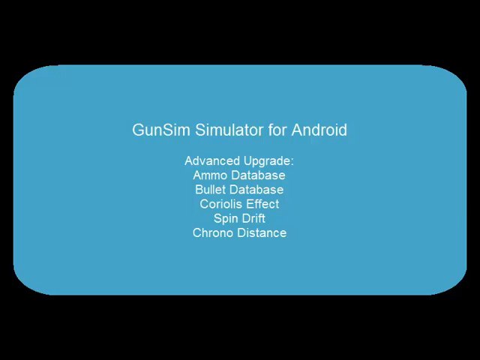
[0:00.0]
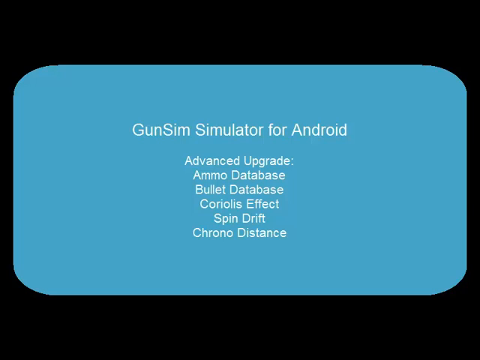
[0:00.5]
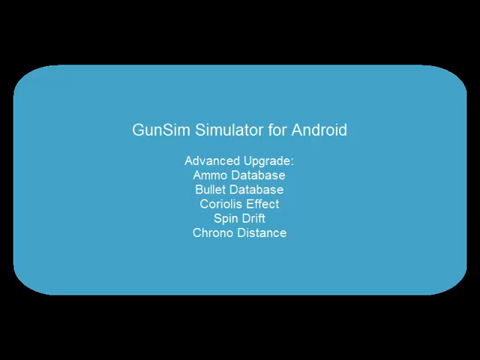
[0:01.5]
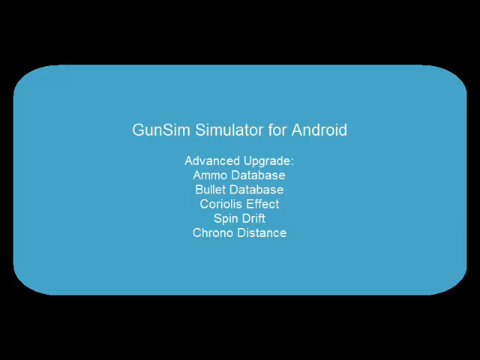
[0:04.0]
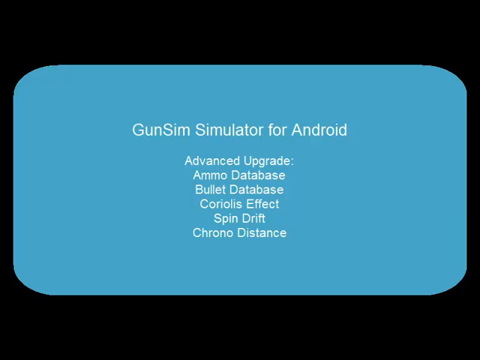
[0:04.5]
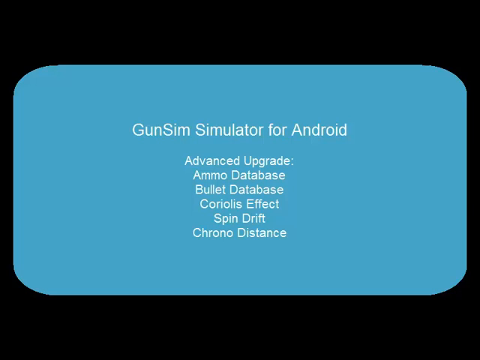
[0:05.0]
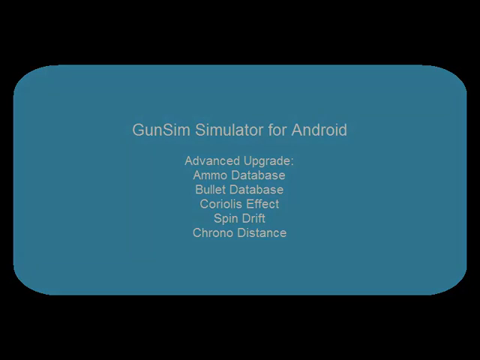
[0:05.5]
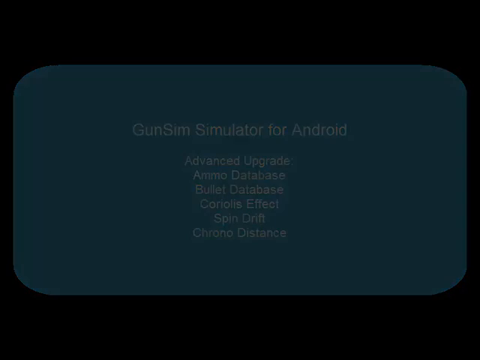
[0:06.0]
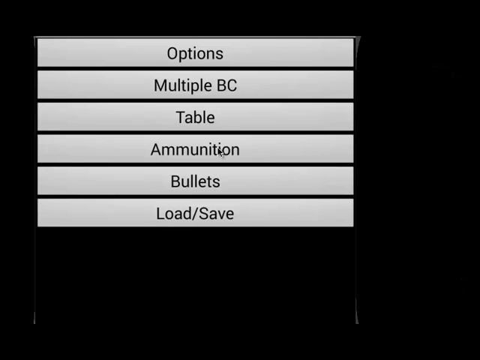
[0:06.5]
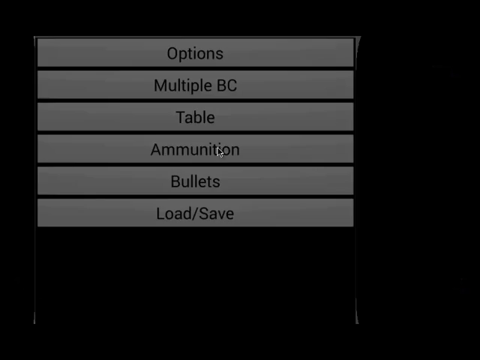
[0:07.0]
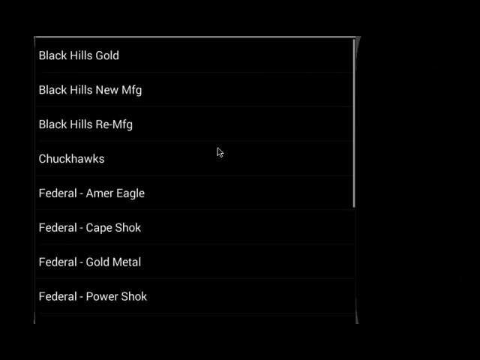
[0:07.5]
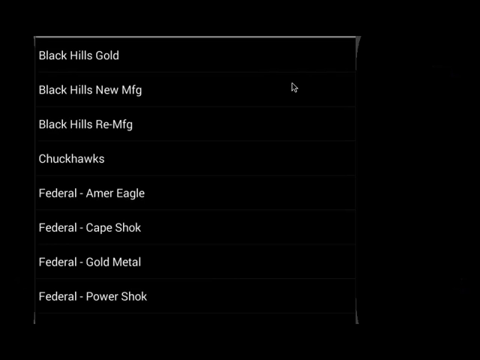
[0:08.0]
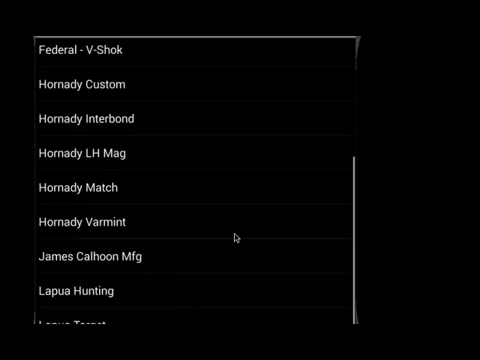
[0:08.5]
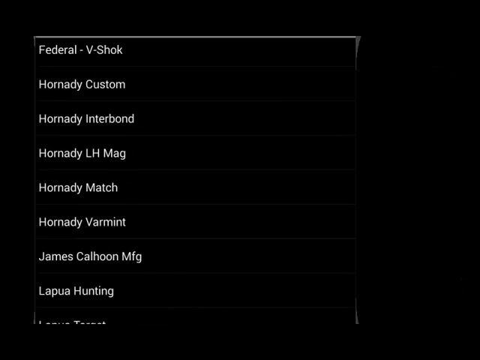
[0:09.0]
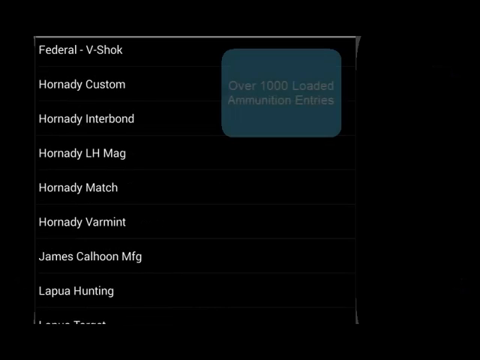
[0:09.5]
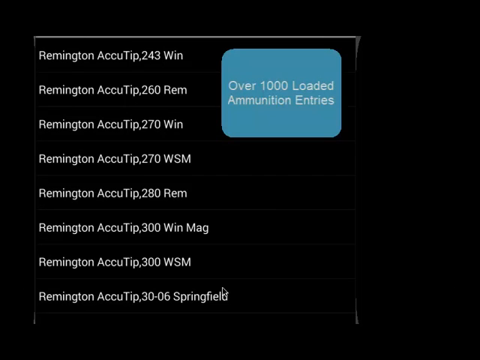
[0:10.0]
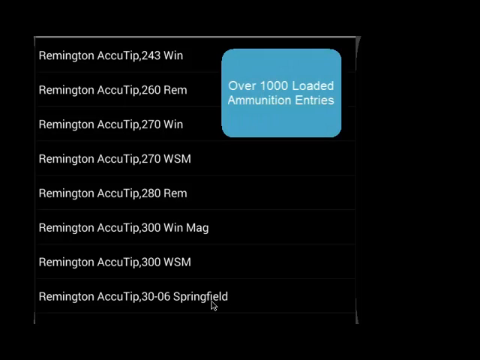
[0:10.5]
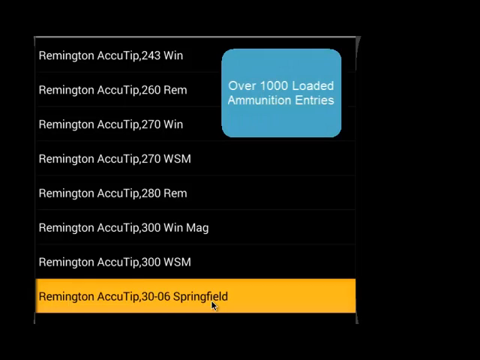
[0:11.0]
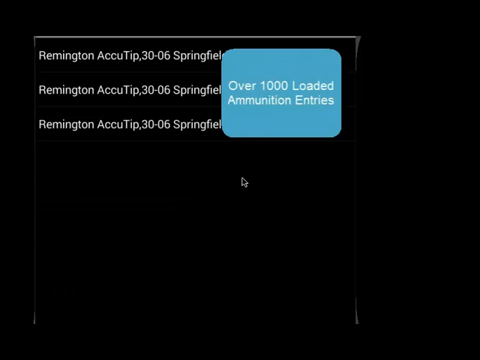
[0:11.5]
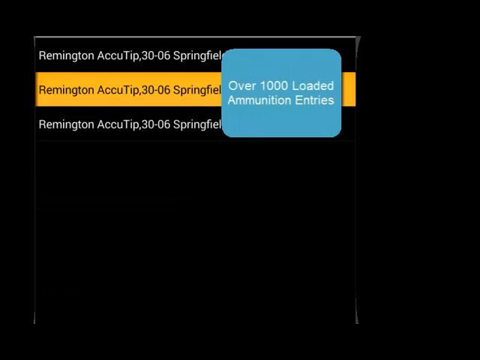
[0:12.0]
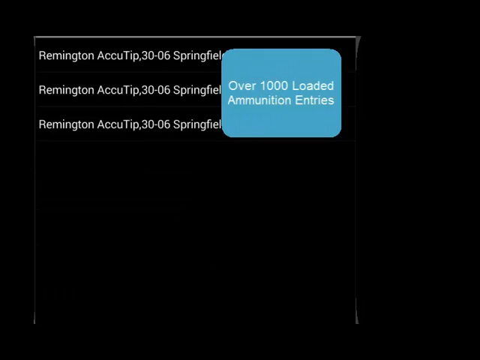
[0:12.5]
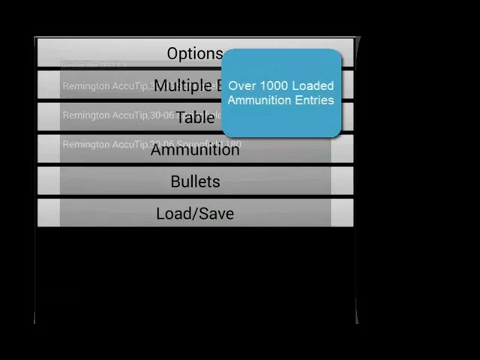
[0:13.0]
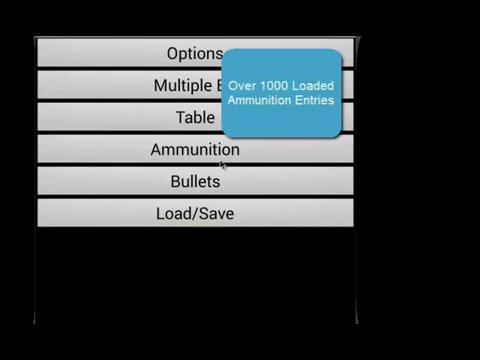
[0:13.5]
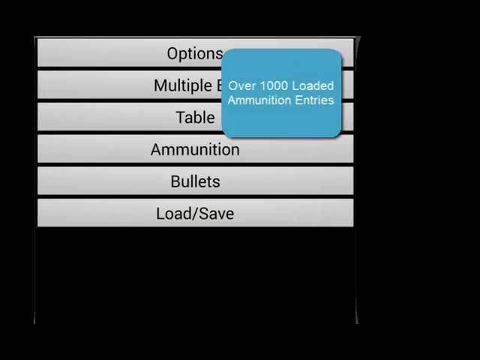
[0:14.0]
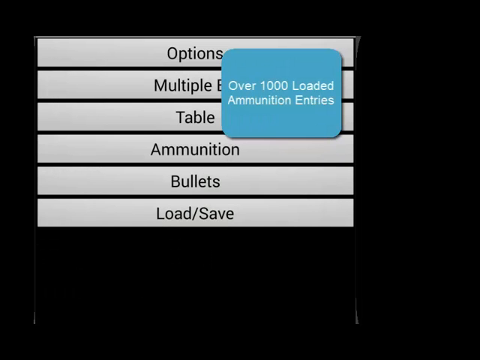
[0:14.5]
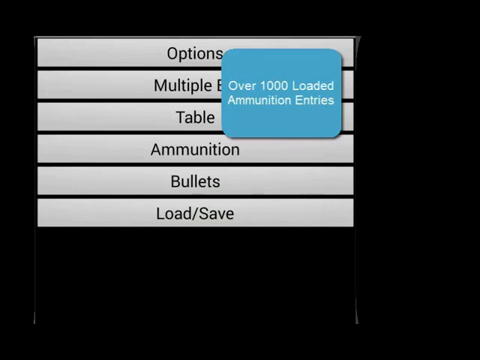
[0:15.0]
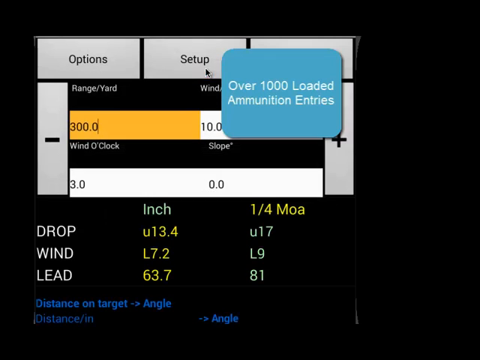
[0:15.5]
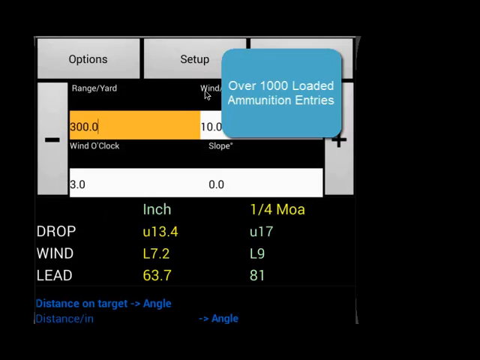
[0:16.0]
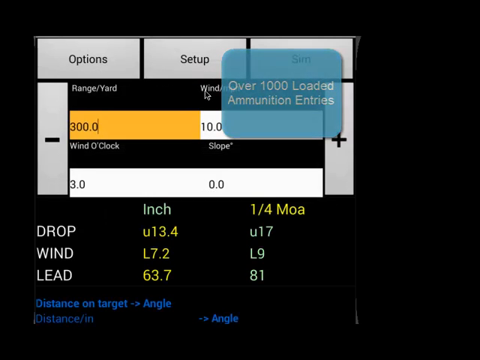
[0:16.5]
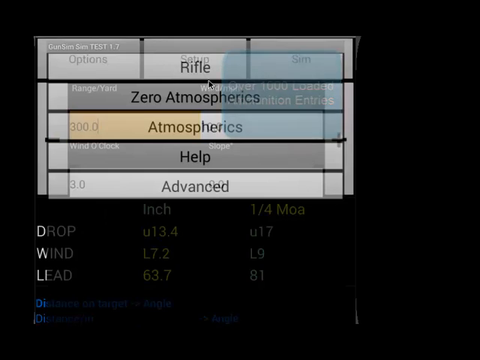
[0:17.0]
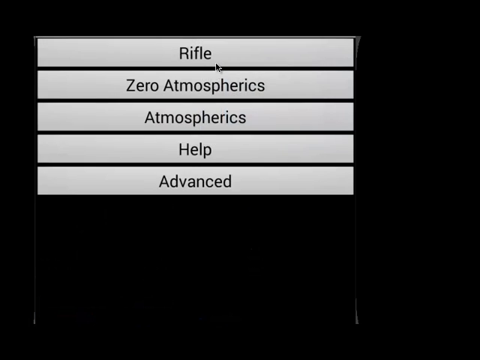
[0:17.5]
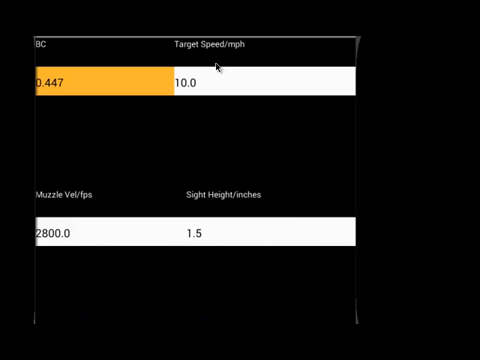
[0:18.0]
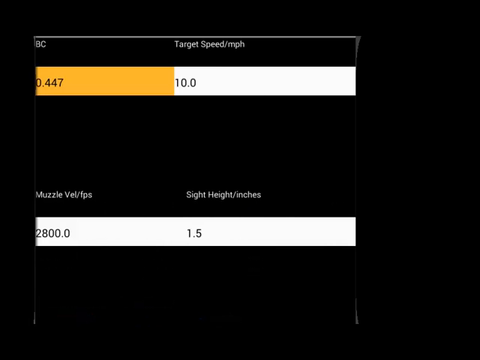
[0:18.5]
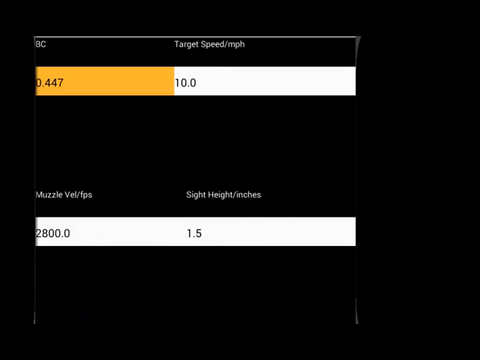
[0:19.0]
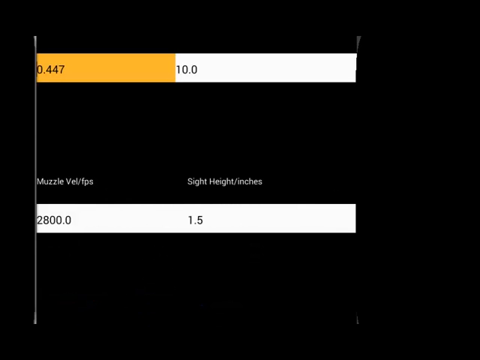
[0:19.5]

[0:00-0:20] A bluish-teal screen fills the background in a rectangular format with rounded edges. White words appear on it. At the very top the title reads "GunSim Simulator for Android", and below it is another group of text: "Advanced Upgrade", "Ammo Database", "Bullet Database", "Coriolis Effect", "Spin Grip" and "Chrono Distance", seemingly in alphabetical order. The screen turns black, leading to a page with a completely black background and a list of words in alphabetical order that seem to be guns of some sort. It appears to load and moves on to other screens showing the guns and their options, where options can be chosen.